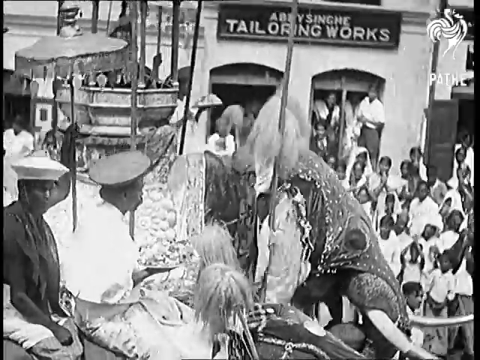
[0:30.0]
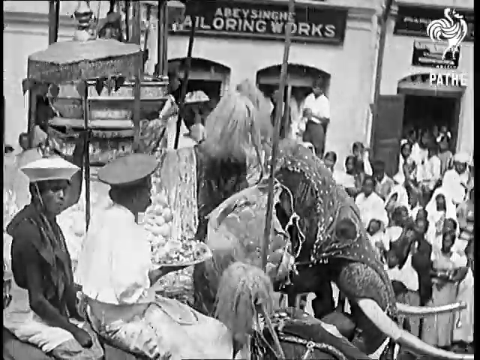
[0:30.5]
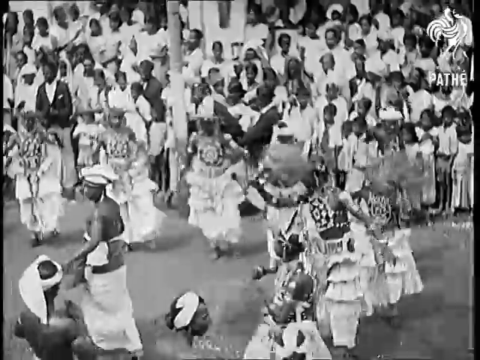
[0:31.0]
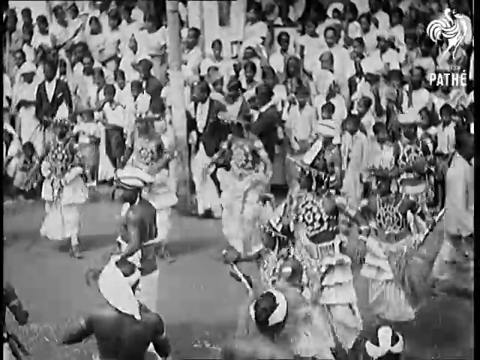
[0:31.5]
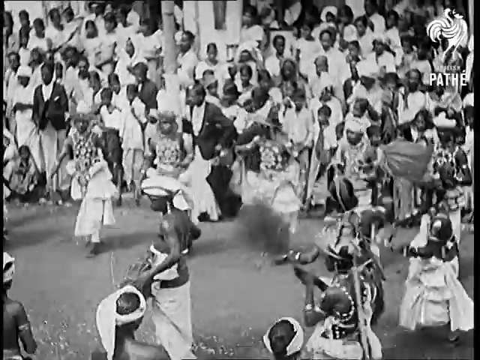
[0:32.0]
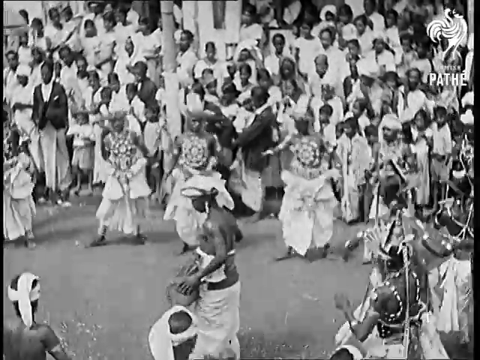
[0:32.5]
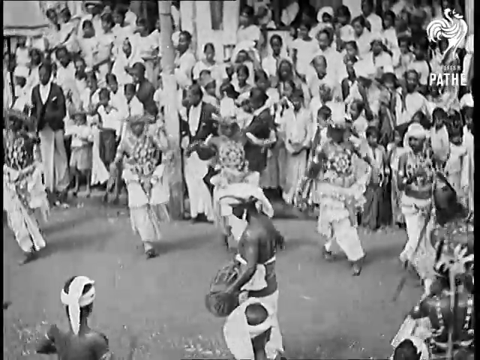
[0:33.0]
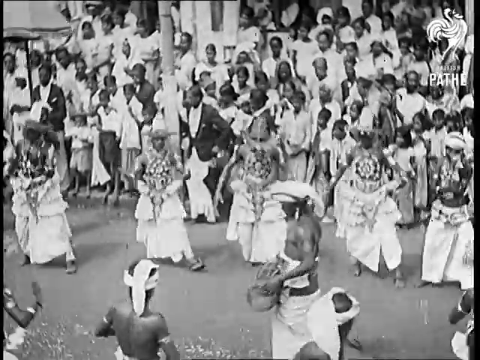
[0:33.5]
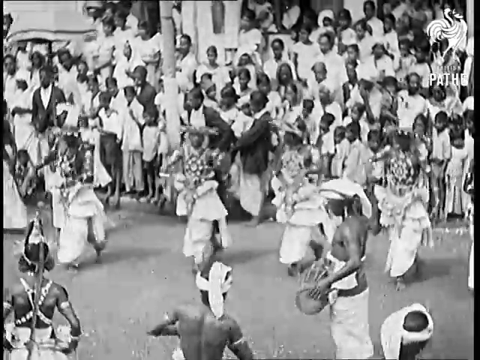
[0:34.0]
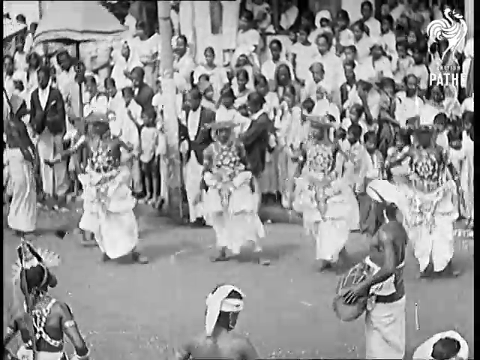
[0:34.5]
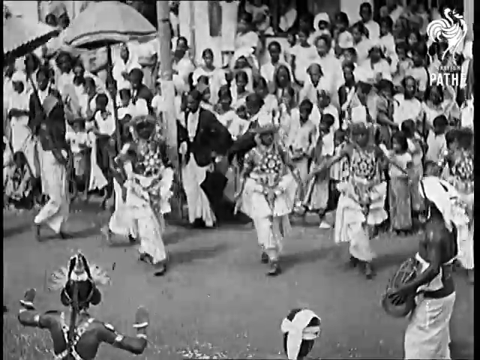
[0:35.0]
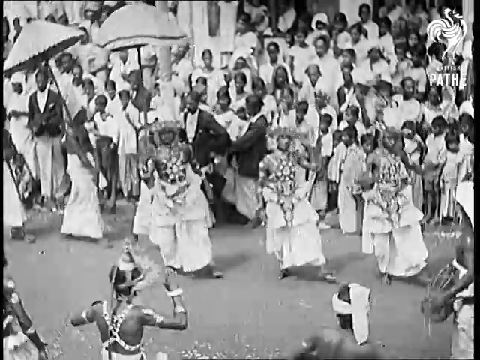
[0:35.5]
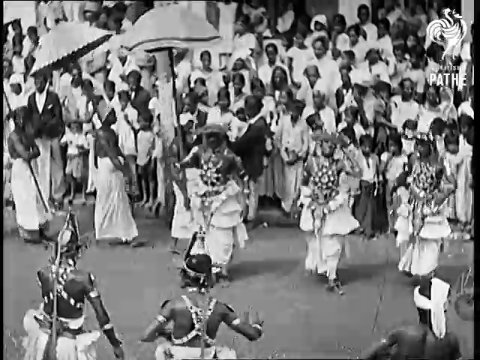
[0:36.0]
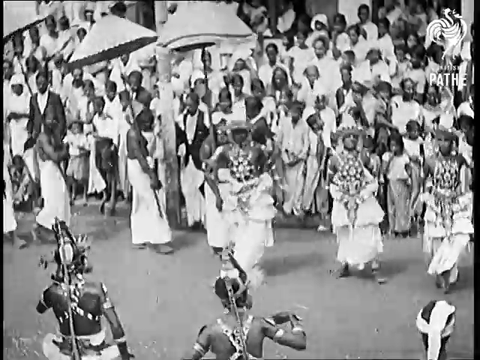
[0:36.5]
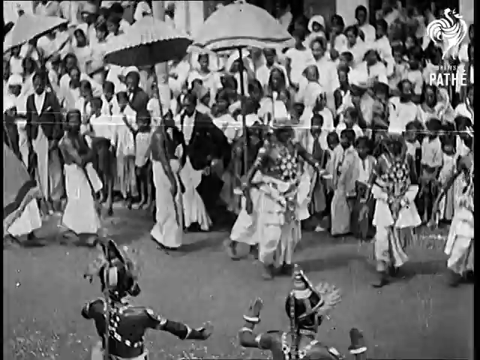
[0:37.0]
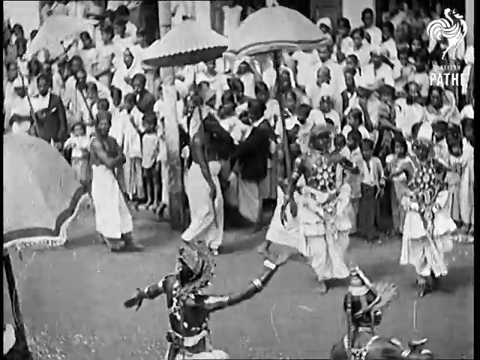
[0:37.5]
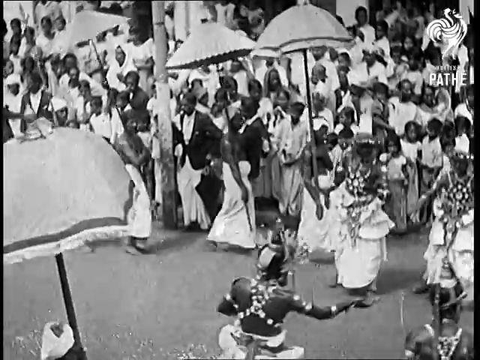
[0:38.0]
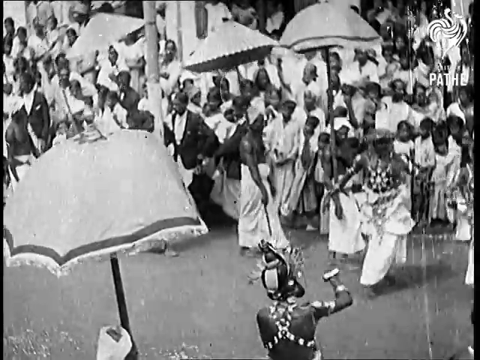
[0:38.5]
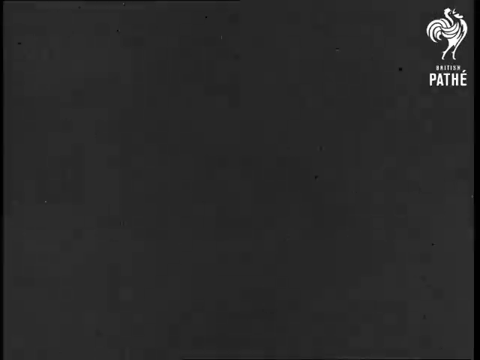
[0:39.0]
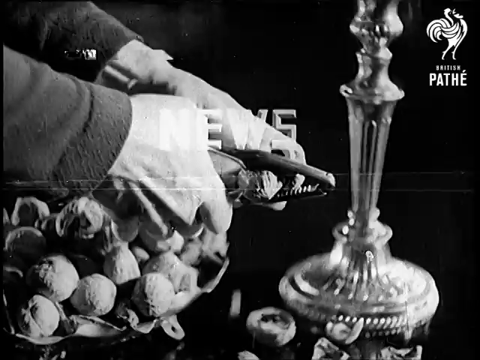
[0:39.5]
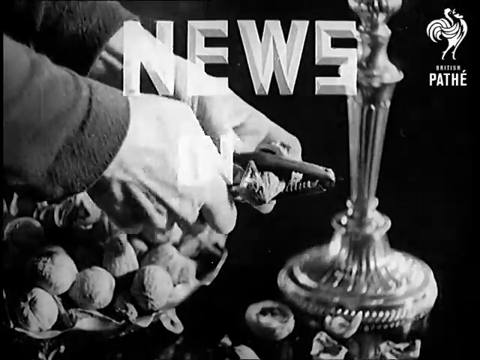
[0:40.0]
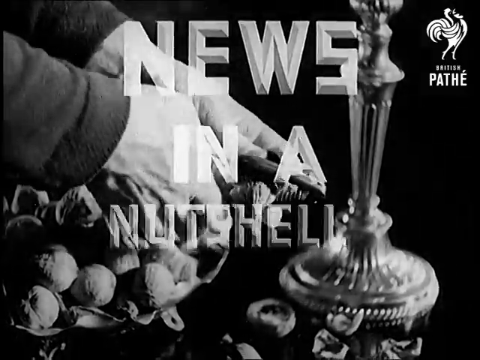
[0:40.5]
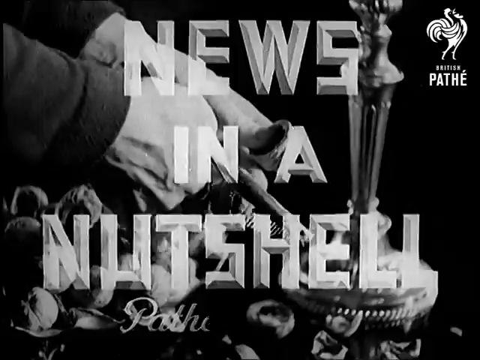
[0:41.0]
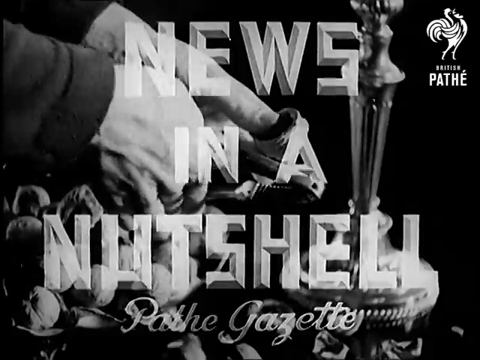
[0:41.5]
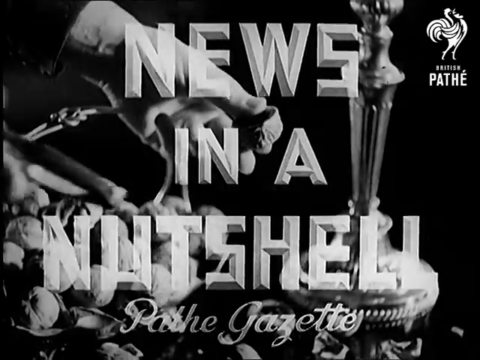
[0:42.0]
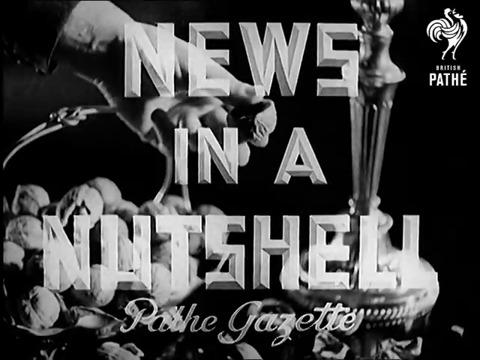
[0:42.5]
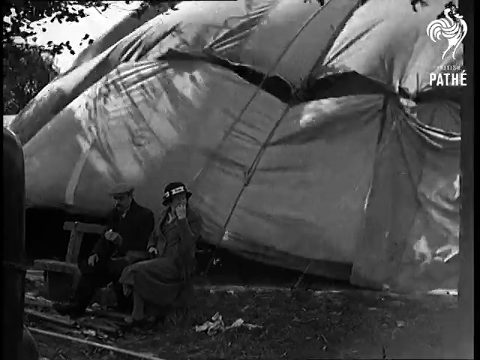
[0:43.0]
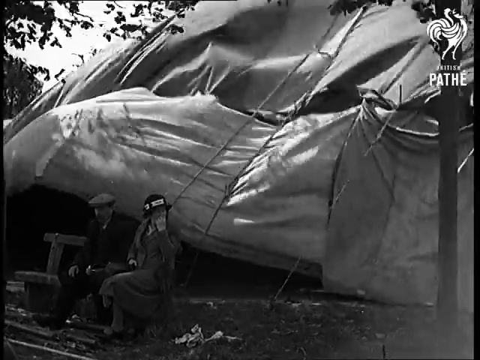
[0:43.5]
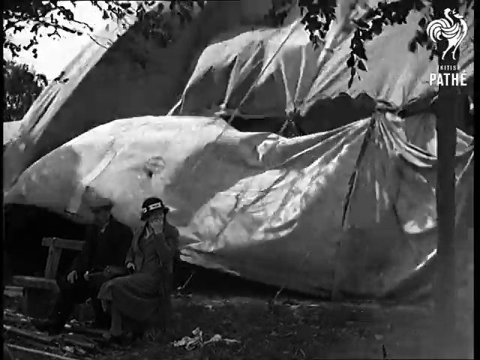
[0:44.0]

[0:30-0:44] The camera zooms in more on people dancing and taking part in the parade. The video then has a small break. There are zoomed-in views of shops, including what looks like a tailor shop. People at the parade appear to be having a great time; the people in the background are there, apparently attentive, though their facial expressions are hard to see. The very last scene shows windy conditions, with a tent moving in the wind.